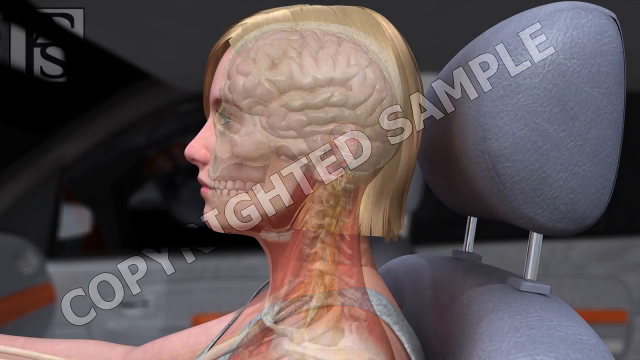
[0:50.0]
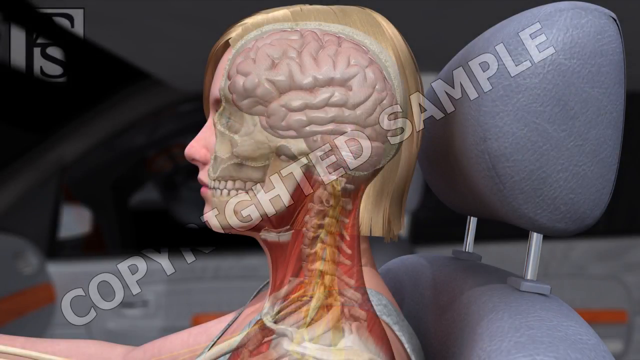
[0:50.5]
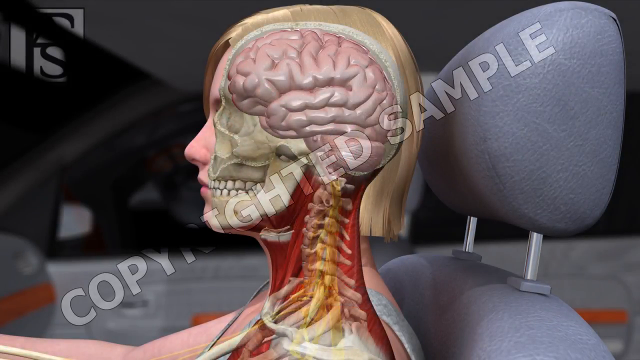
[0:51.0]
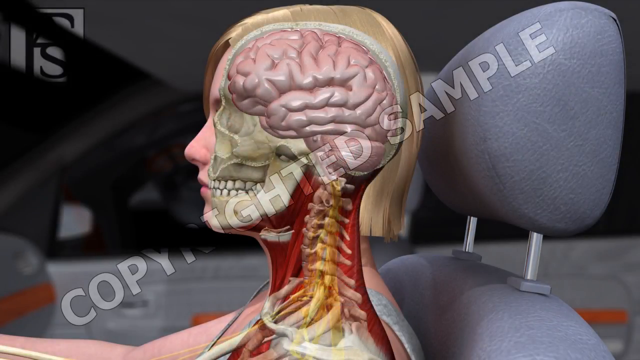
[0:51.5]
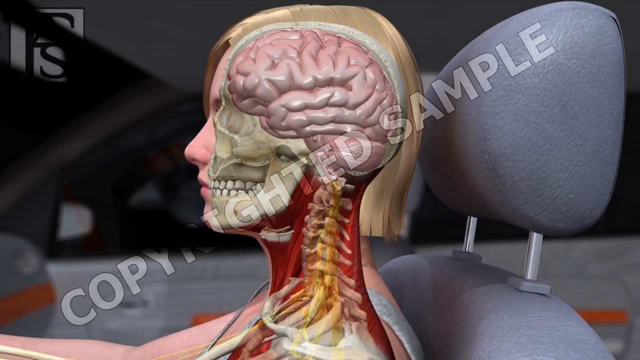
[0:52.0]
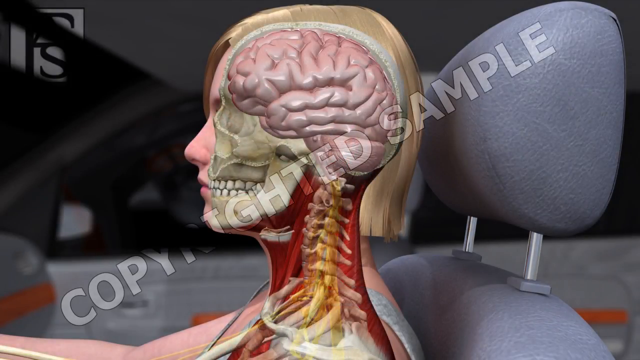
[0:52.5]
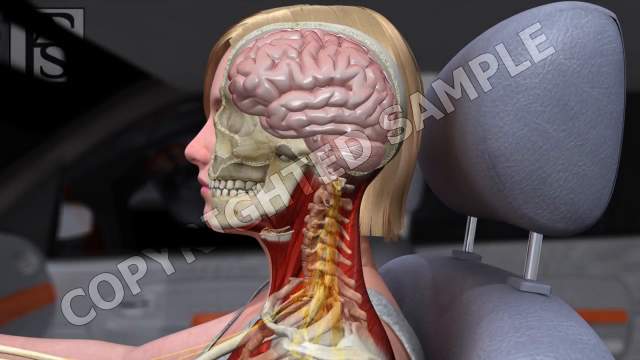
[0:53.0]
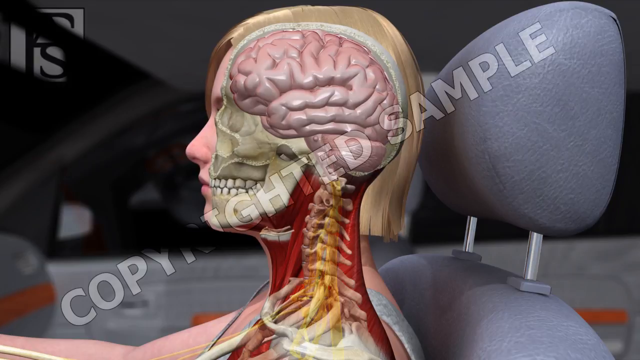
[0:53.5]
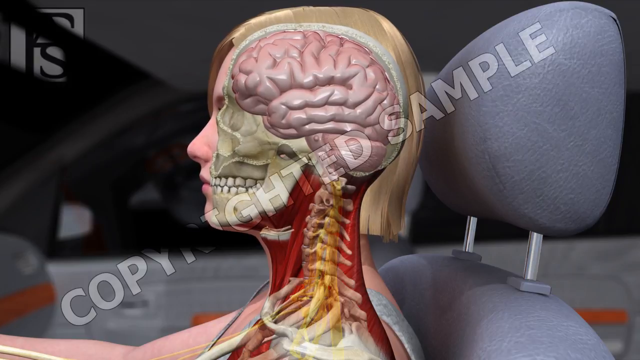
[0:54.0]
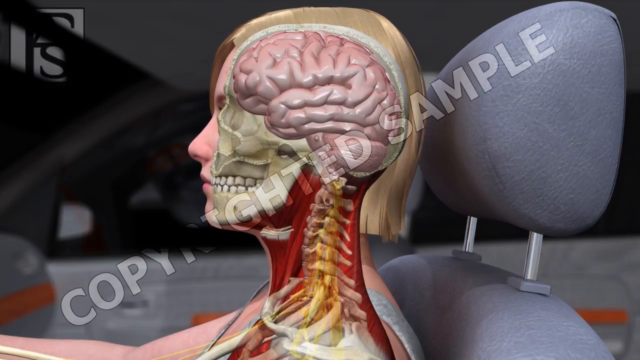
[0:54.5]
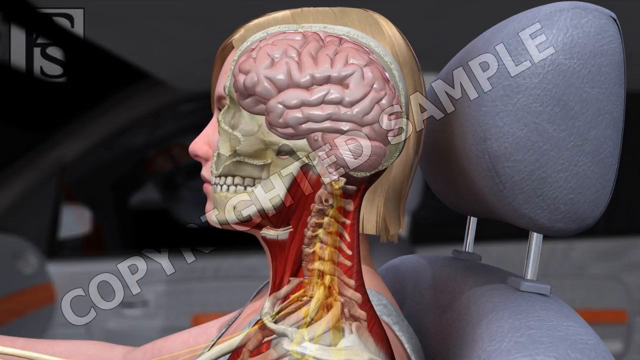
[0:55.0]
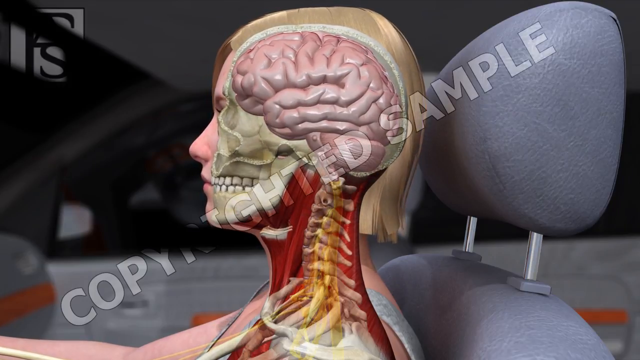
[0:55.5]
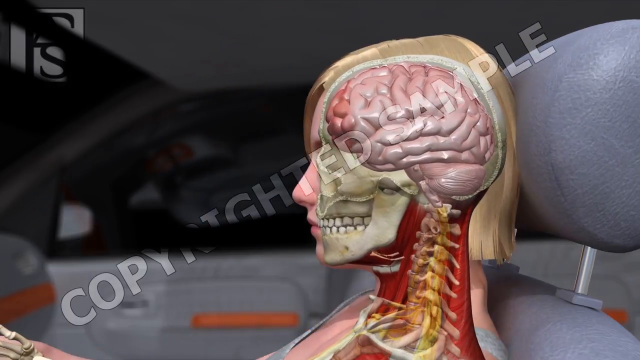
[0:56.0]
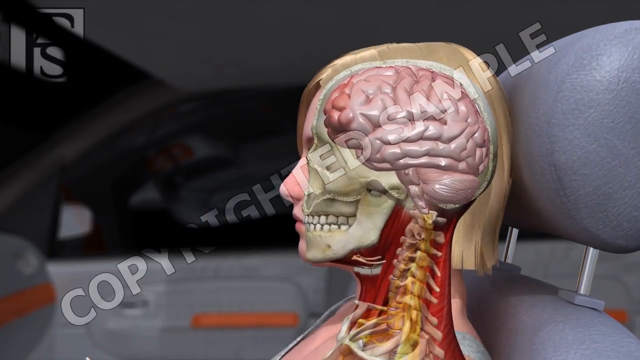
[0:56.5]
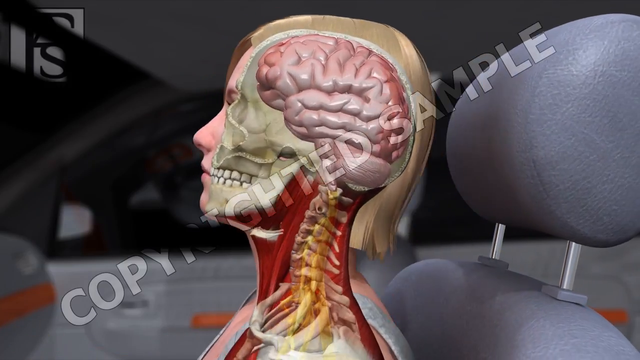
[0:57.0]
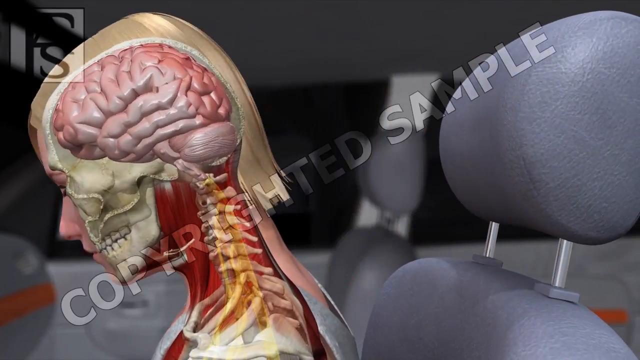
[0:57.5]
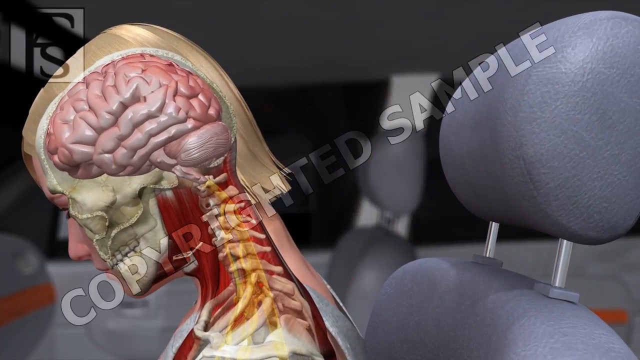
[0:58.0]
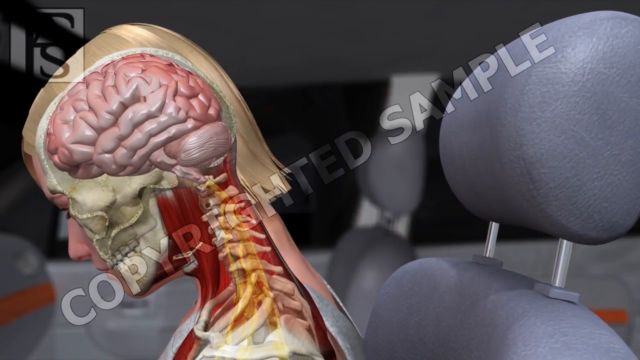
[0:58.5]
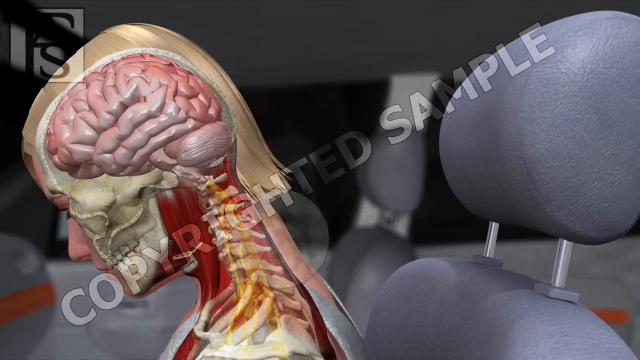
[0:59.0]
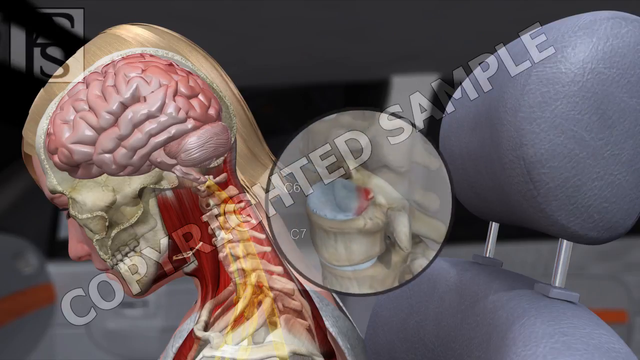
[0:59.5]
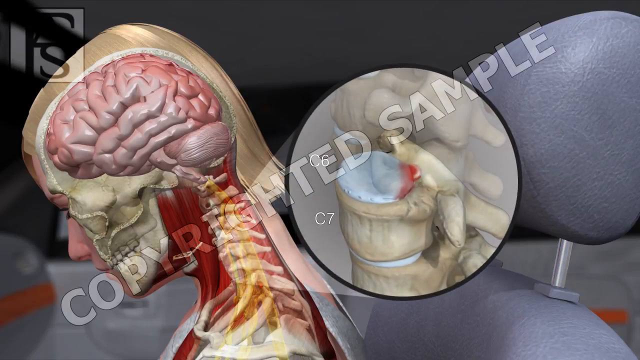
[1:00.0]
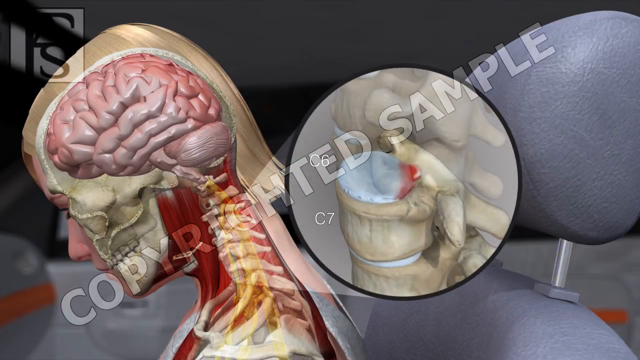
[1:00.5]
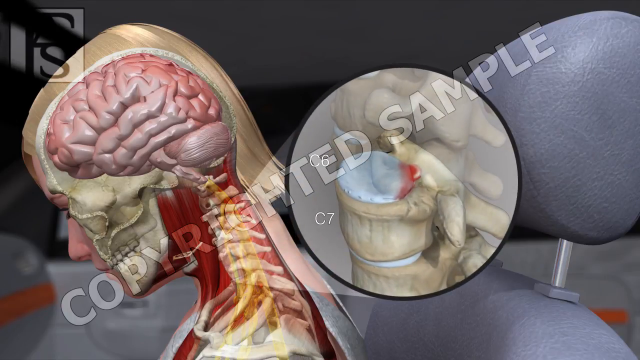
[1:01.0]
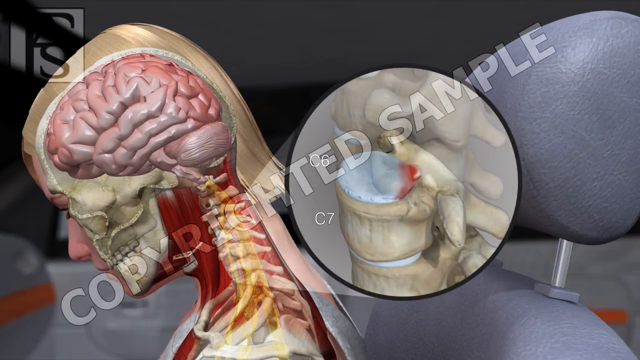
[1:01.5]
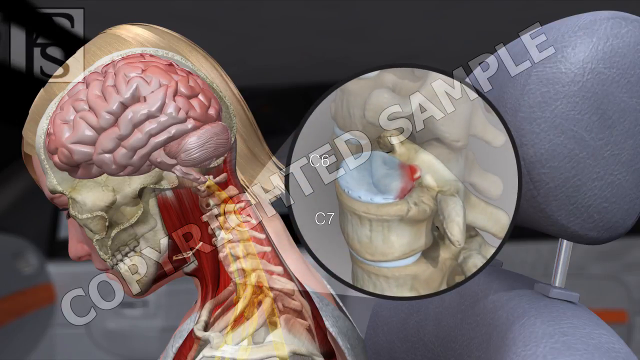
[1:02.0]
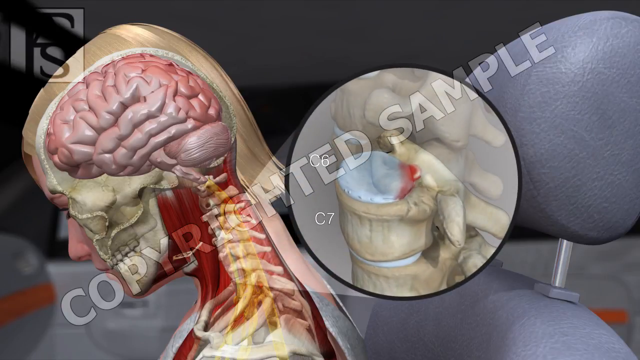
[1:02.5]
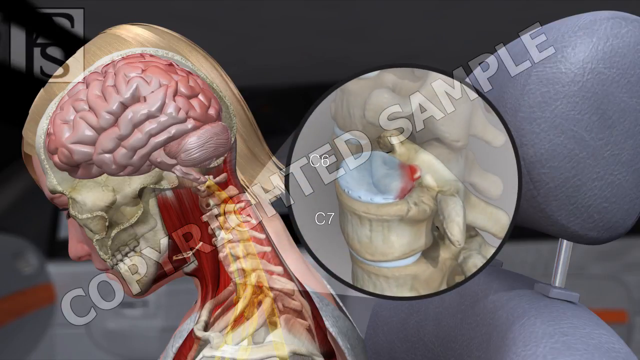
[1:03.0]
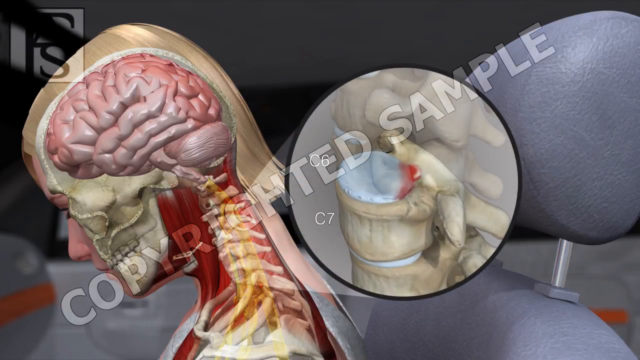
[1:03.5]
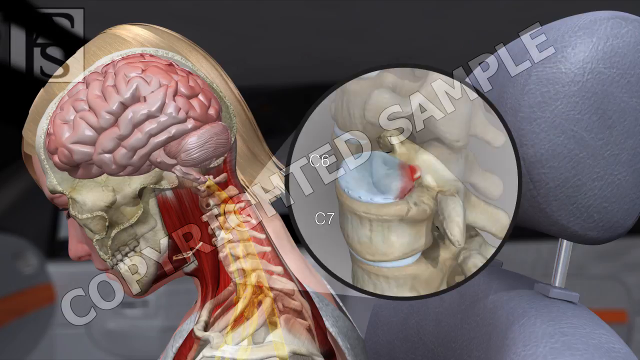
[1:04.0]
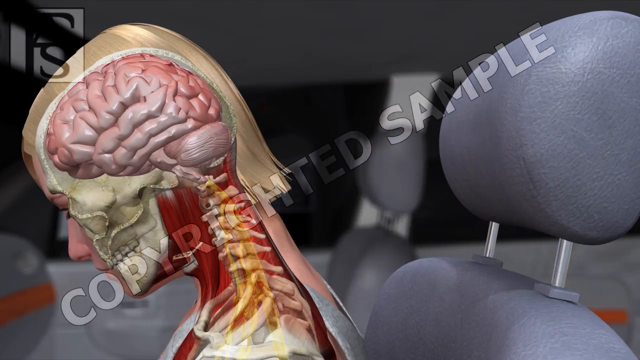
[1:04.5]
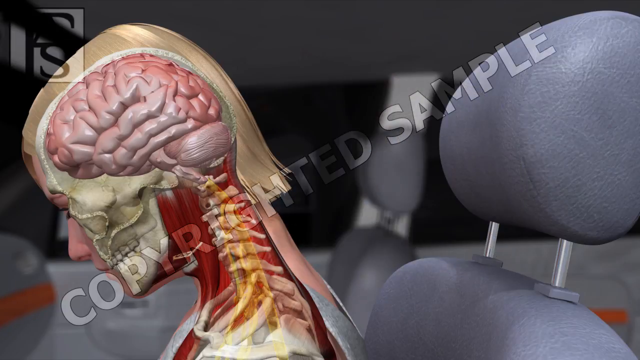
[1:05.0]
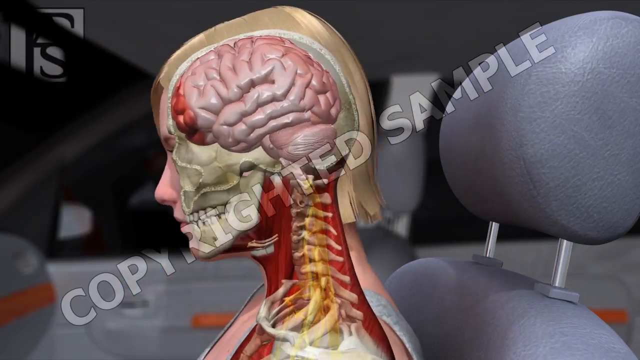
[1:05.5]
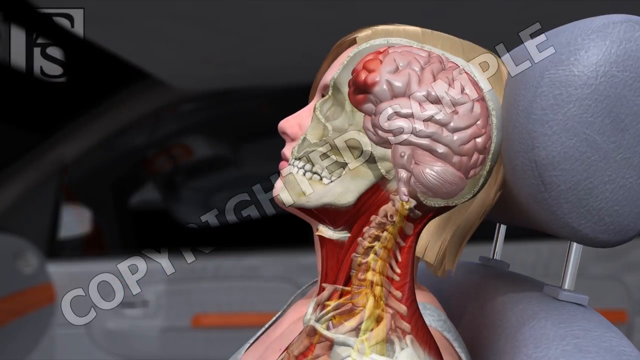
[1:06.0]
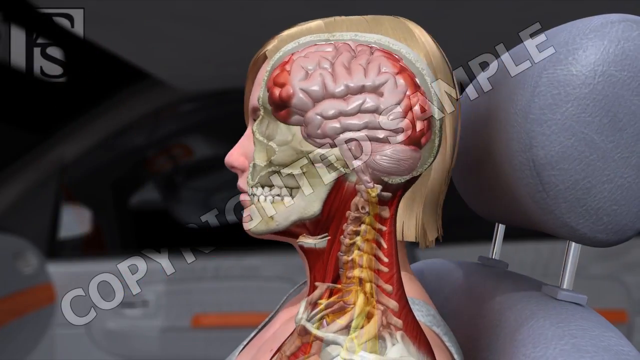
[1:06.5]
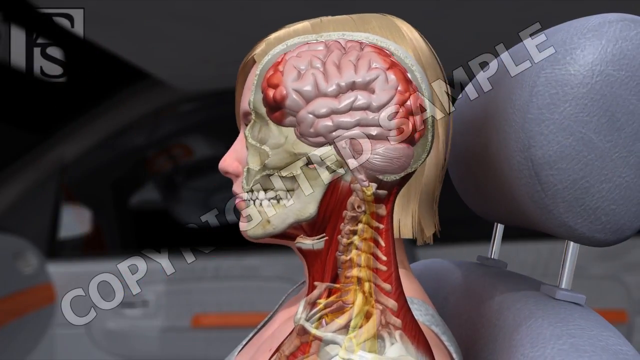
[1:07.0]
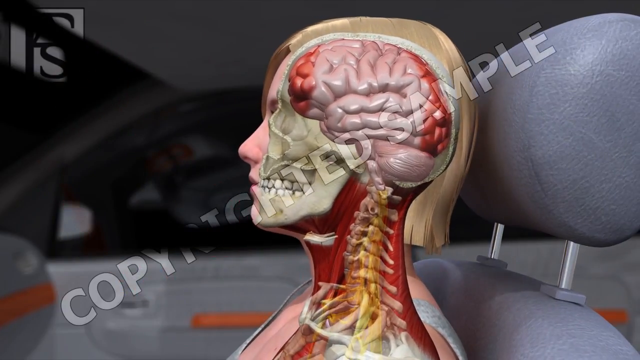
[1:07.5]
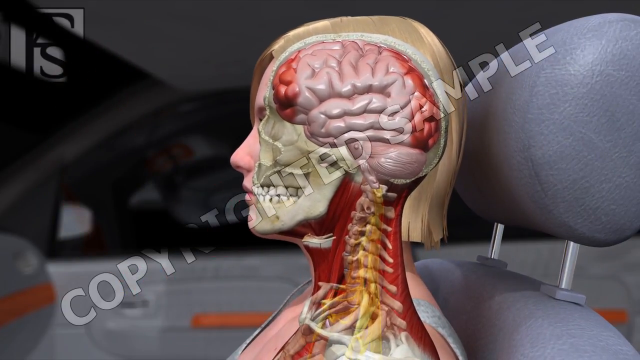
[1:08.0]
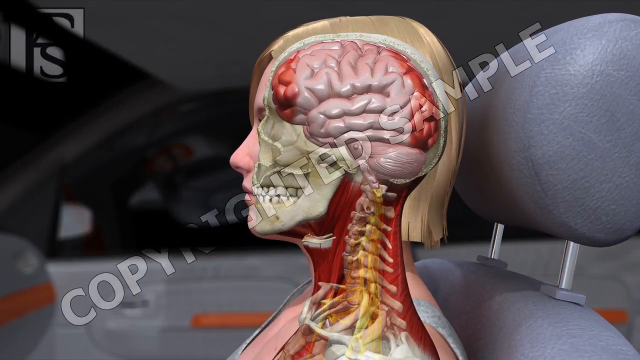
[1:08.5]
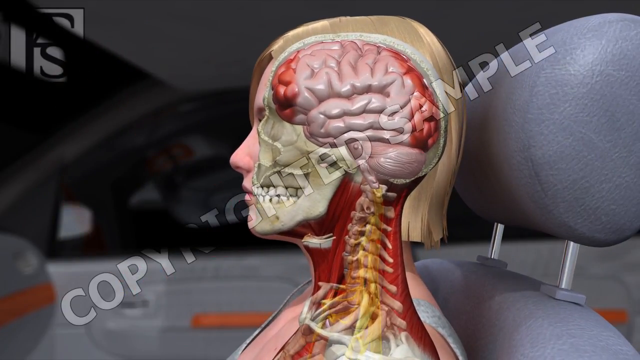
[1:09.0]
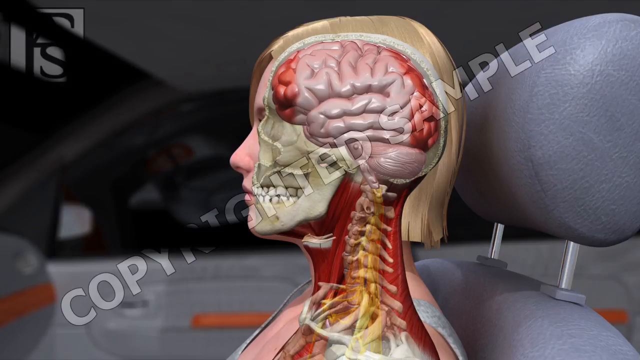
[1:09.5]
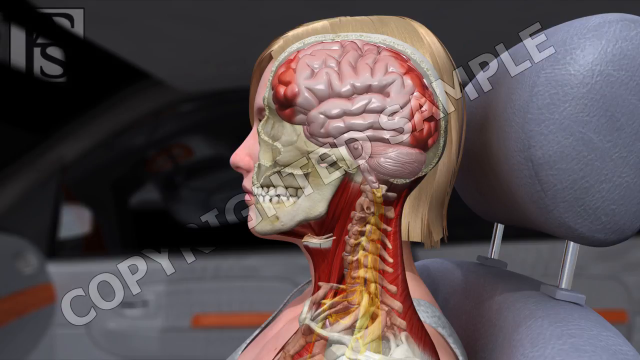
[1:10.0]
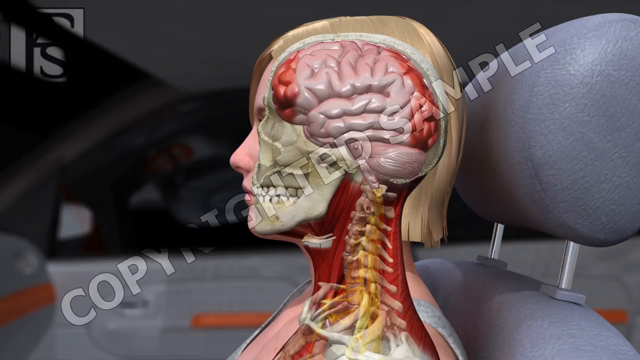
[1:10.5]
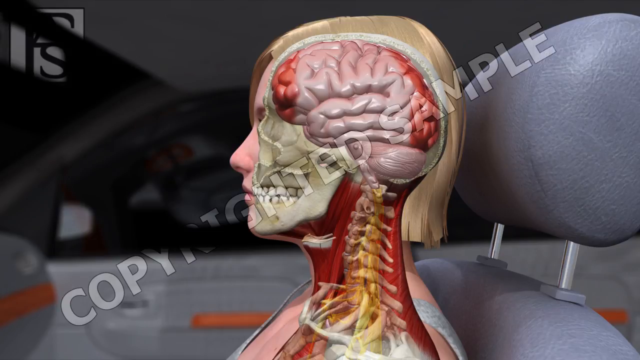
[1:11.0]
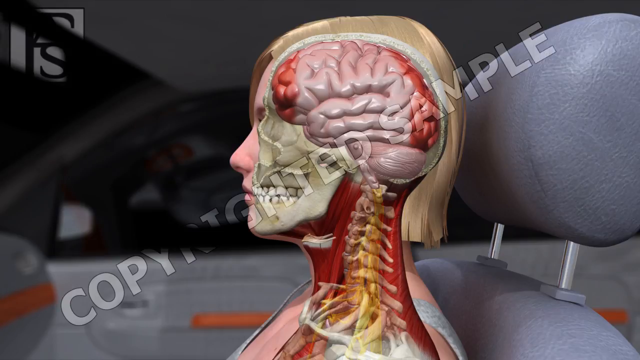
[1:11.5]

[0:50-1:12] The illustration shows the inside of the human body: the brain, the jaw and the neck. It depicts the damage a low-speed rear-end collision of 10 to 15 miles an hour can cause, especially to the neck and the brain: the head is quickly moved back, then forward, then back again, the brain shifts inside the skull, and the illustration shows that this can cause strains or sprains in the neck and bruising on the brain.